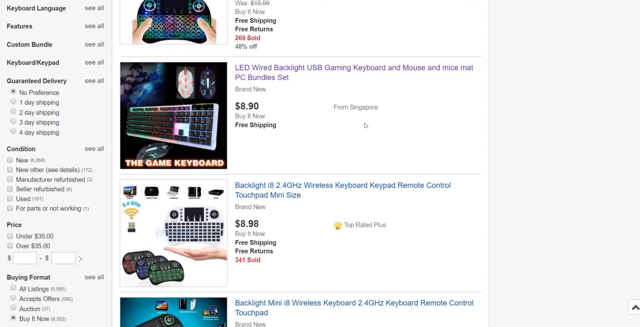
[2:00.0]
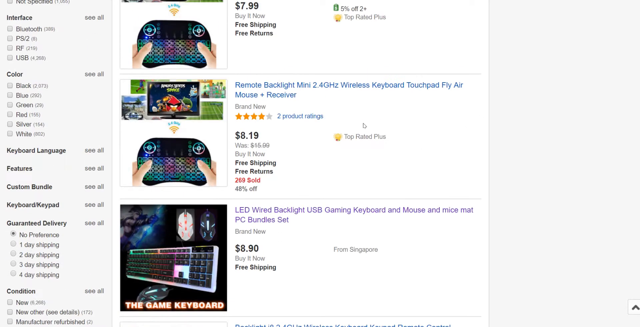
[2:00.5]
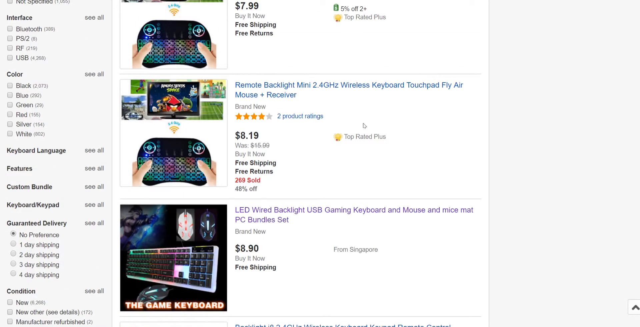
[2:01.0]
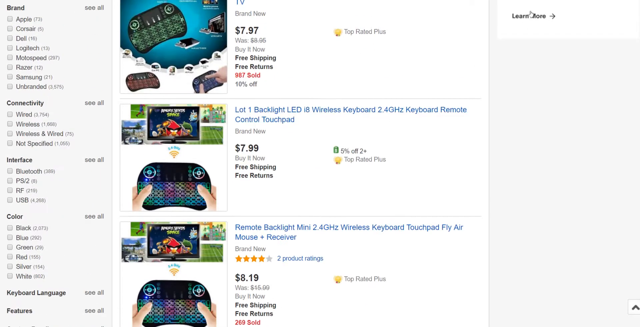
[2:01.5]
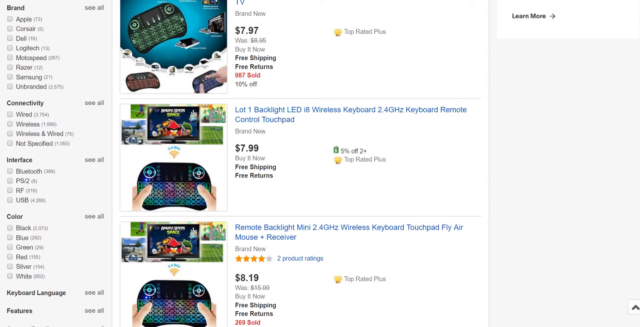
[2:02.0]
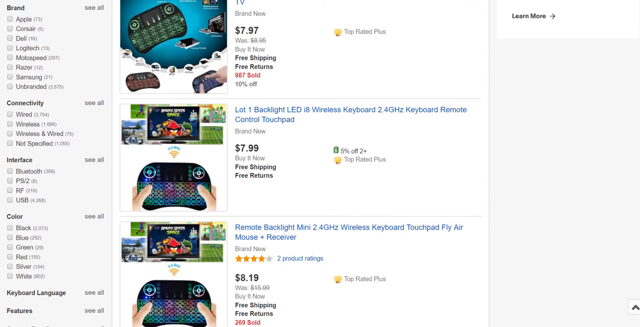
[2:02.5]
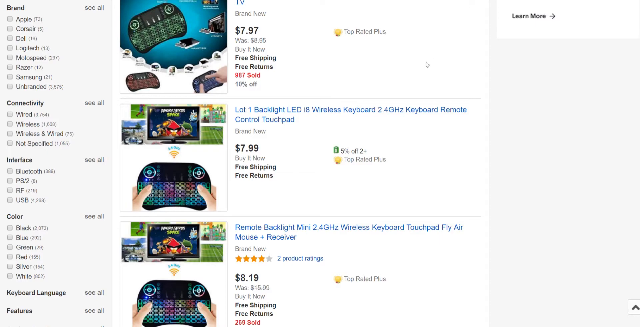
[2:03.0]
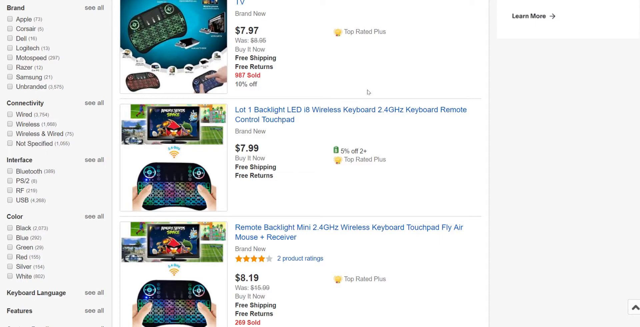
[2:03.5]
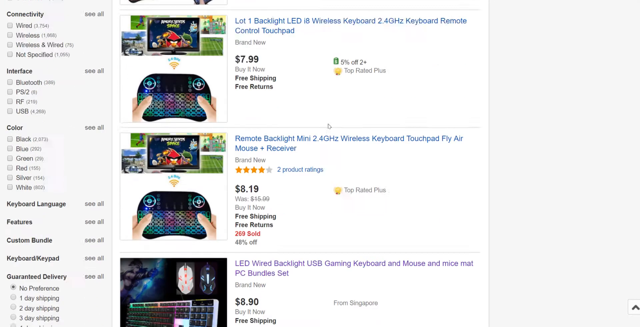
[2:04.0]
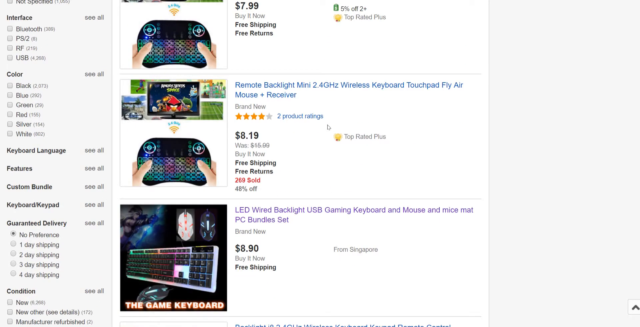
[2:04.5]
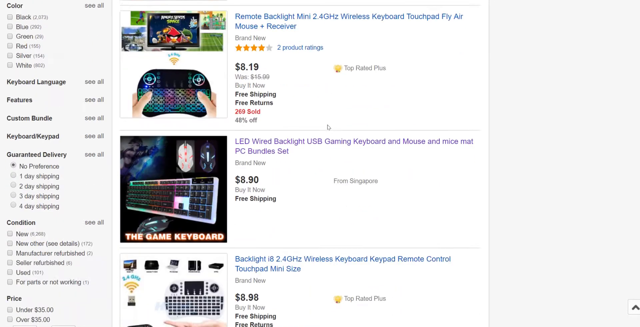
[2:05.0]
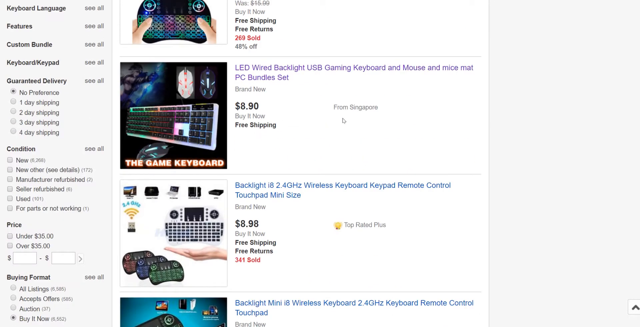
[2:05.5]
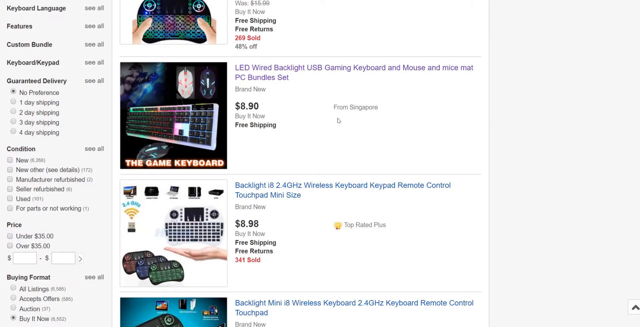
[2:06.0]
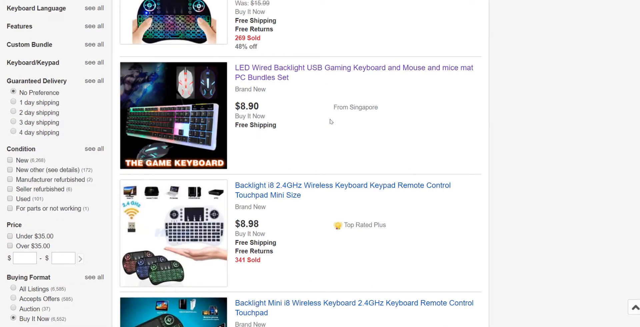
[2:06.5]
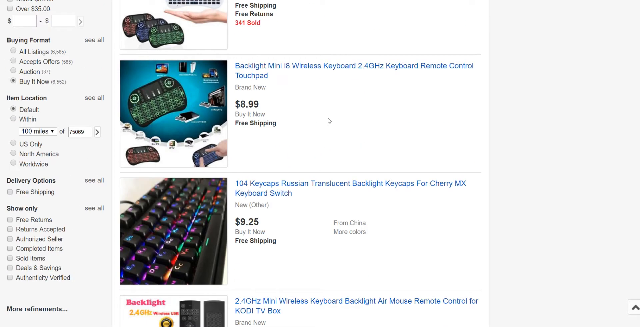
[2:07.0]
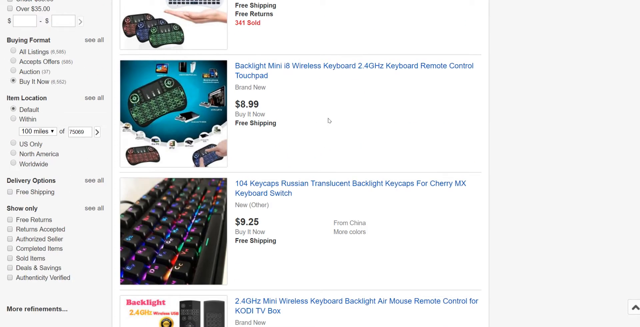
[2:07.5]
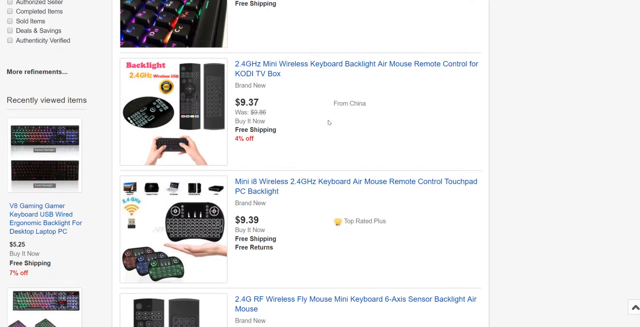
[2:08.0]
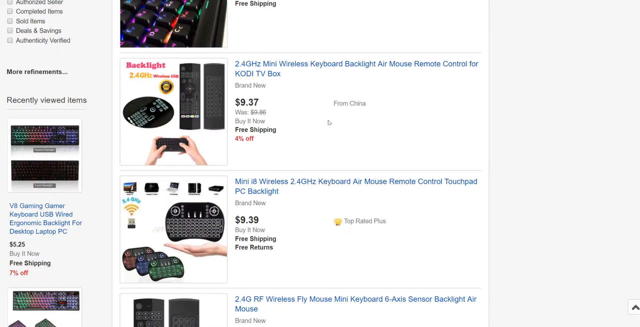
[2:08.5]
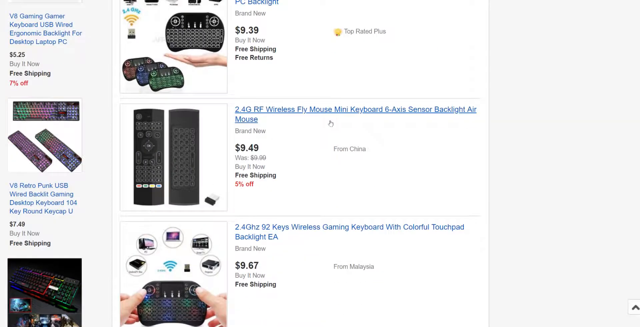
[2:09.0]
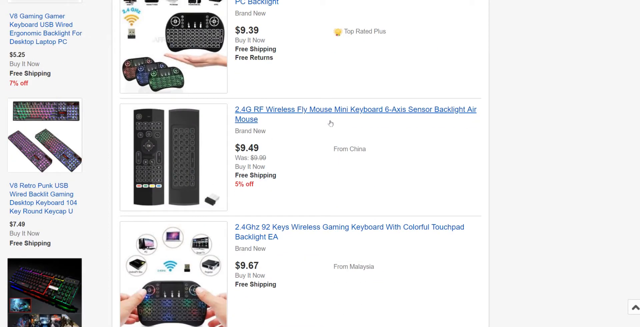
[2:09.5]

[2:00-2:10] Scrolling continues through more of the mini gaming keyboards, and a couple of remotes also appear among the listings. One says "keyboard, backlight, air mouse, remote control for a Kodi TV box." Most of the mini keyboard listings have similar pictures: cluttered images with small pictures of the types of gaming they can be used for, different backlight colors, and mini versions of the keyboards.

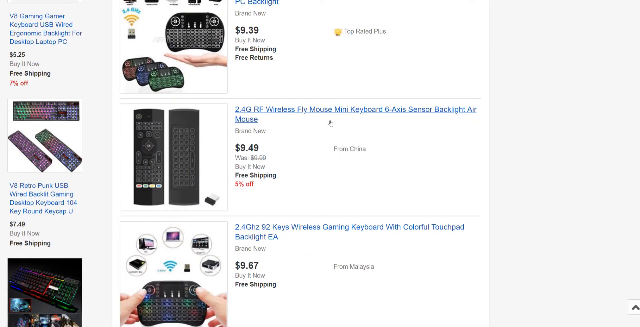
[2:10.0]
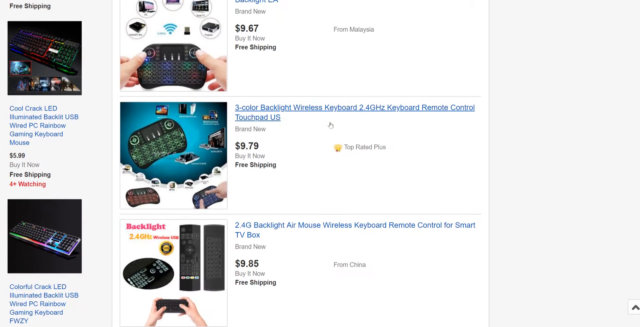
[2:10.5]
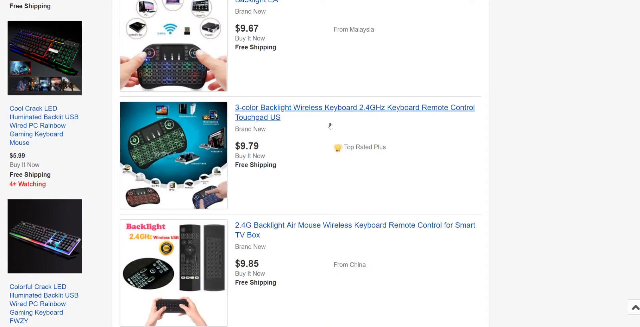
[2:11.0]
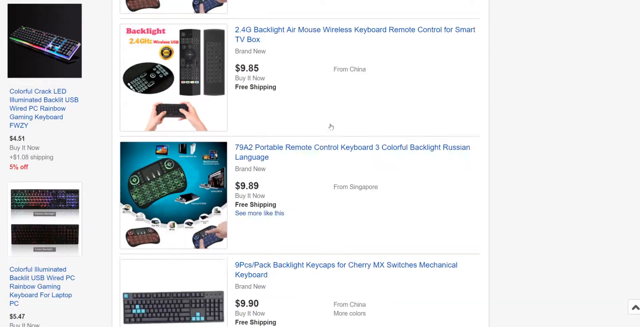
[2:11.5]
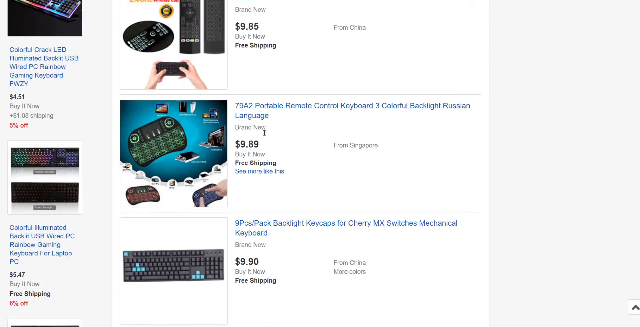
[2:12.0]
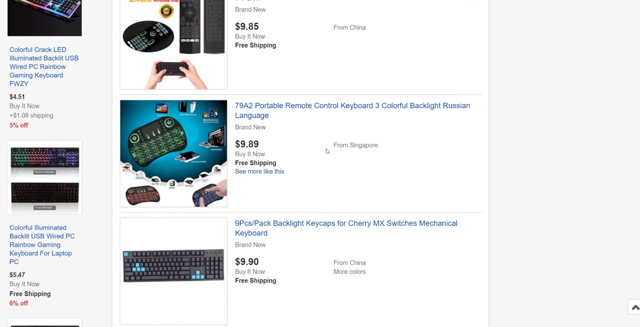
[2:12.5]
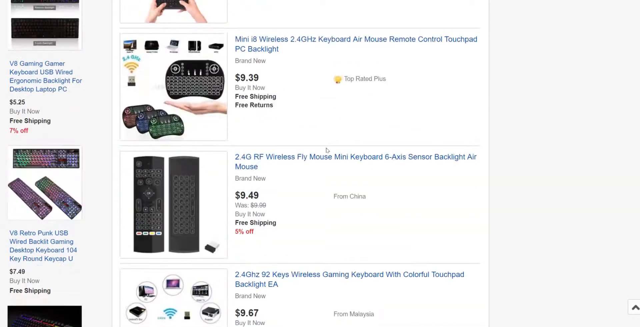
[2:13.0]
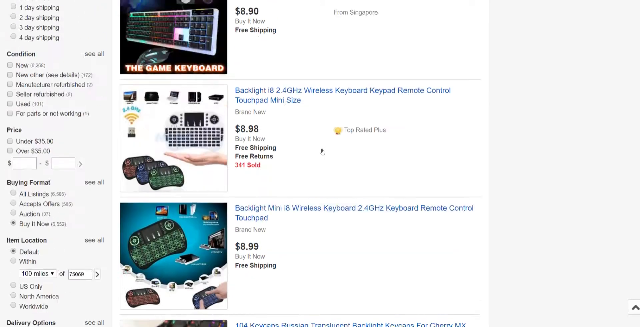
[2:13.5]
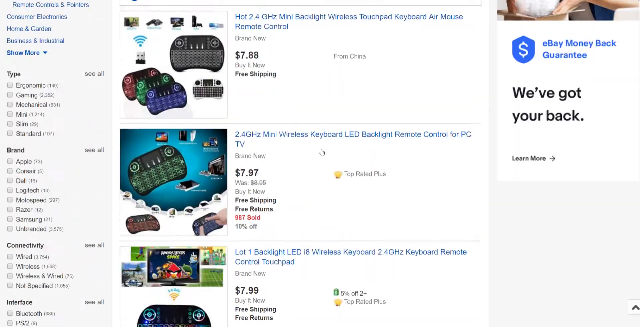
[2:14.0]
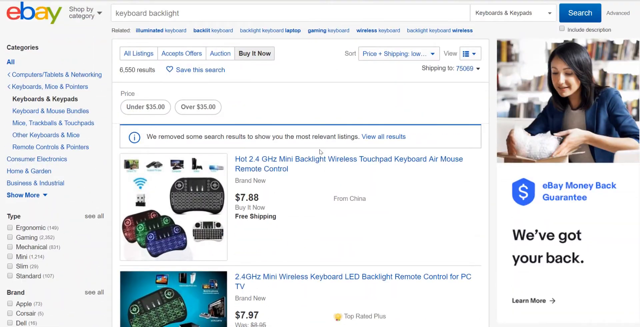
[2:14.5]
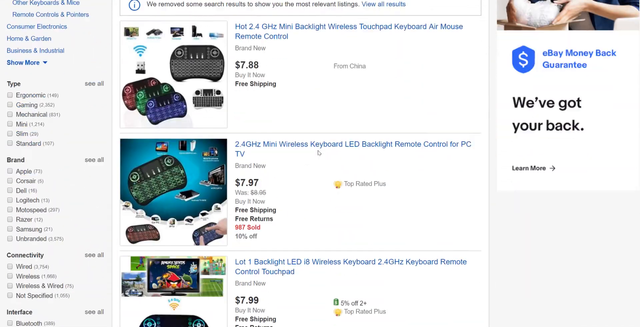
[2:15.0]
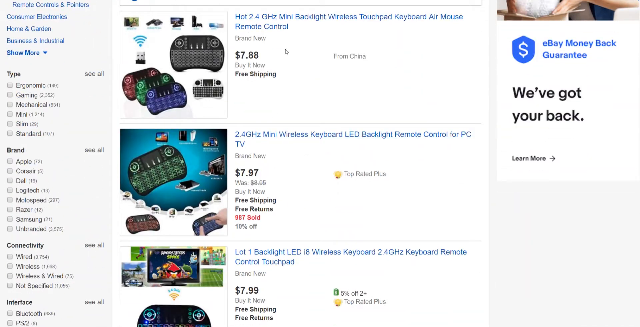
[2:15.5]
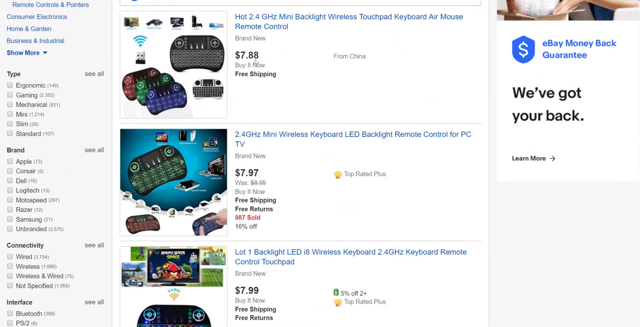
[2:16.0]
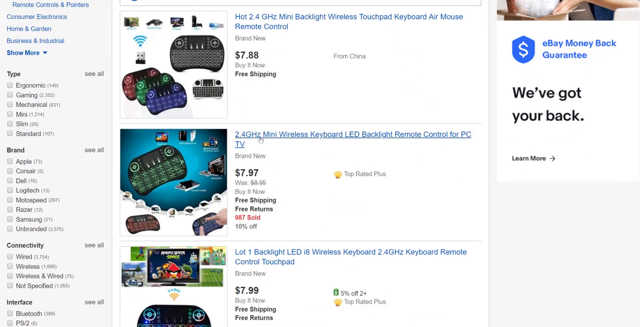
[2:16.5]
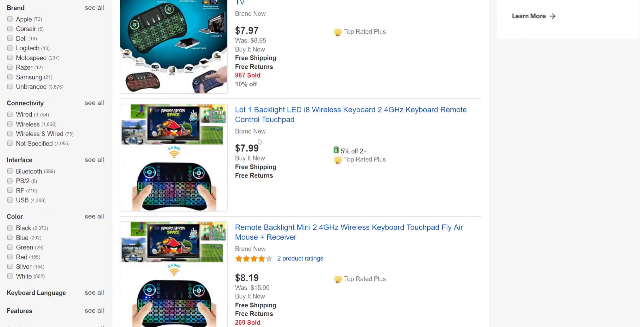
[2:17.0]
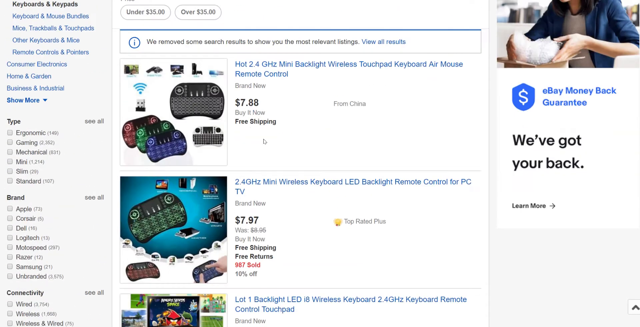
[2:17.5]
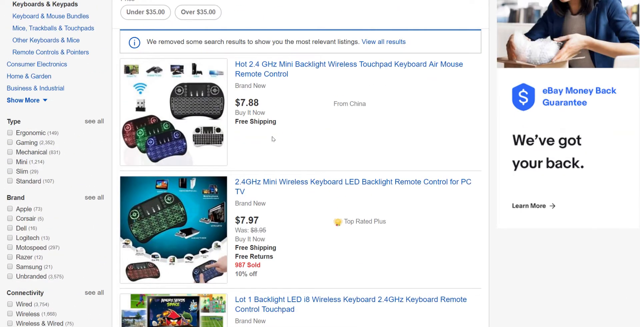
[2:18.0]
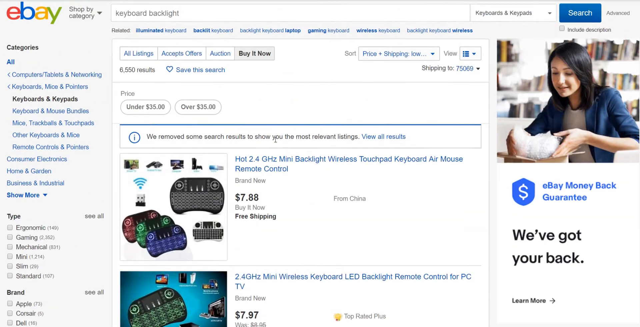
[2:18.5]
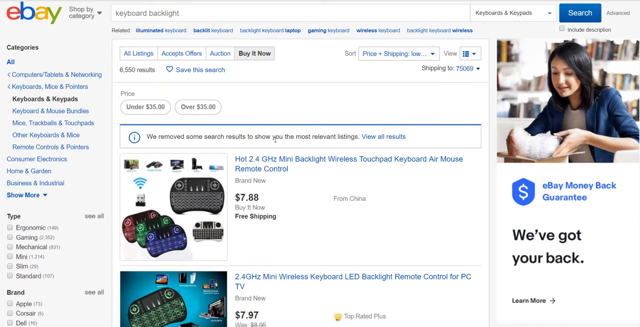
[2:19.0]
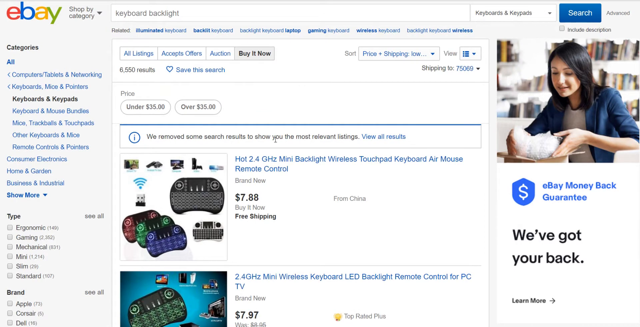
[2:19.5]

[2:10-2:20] The person scrolls down and then back up, again circling the mouse over a price, $7.88, for a "hot 2.4GHz mini backlight wireless touchpad keyboard, air mouse remote control" from China with free shipping. They appear to be focusing on how the search listings have changed since the code was changed. These keyboards seem to have a single price rather than a range, many under $10, and many are from China and Singapore. Some have a small lightbulb icon and say they are "top rated plus" items.